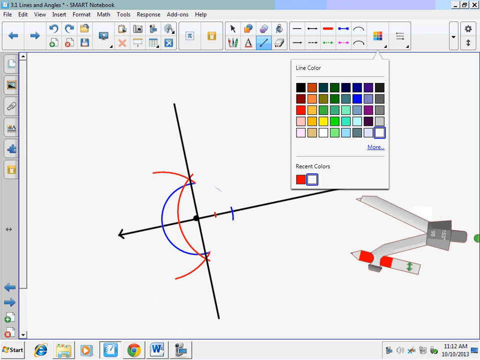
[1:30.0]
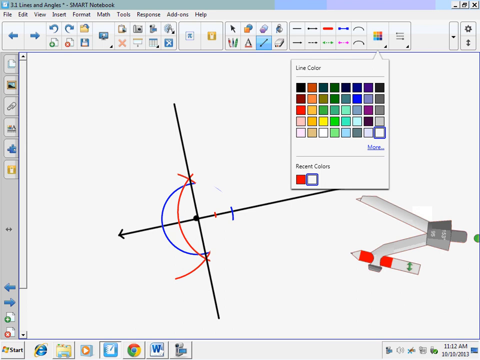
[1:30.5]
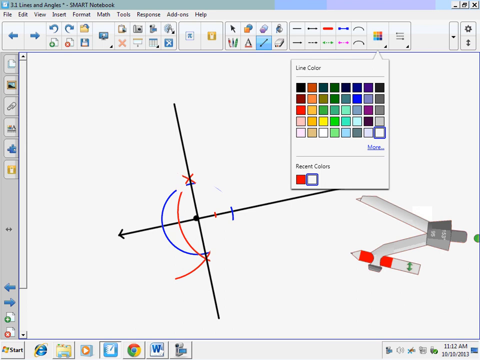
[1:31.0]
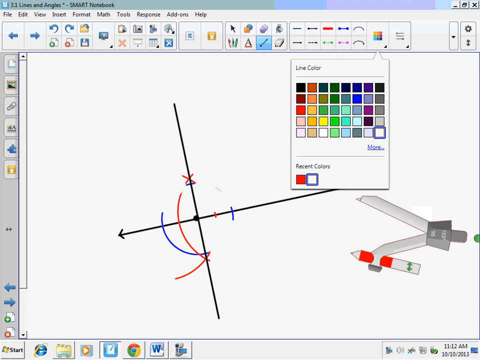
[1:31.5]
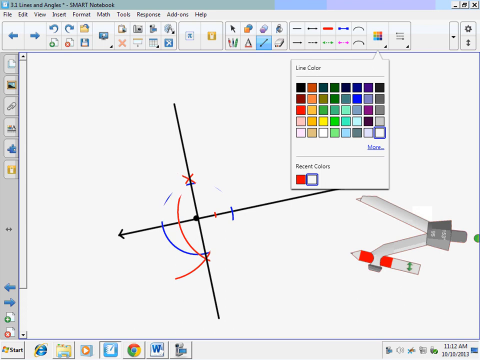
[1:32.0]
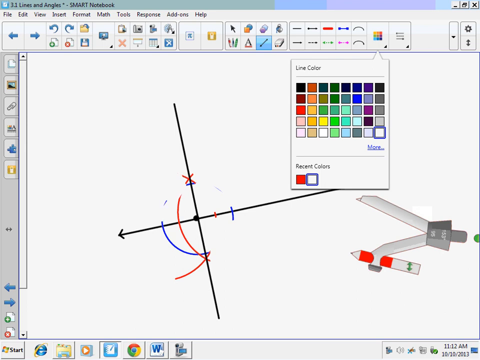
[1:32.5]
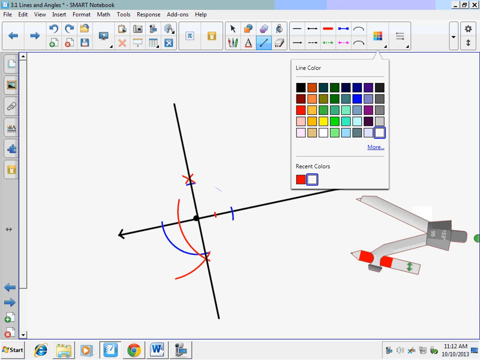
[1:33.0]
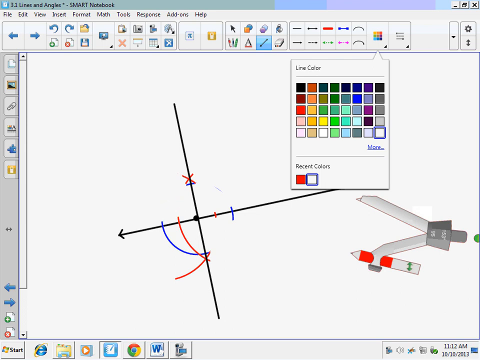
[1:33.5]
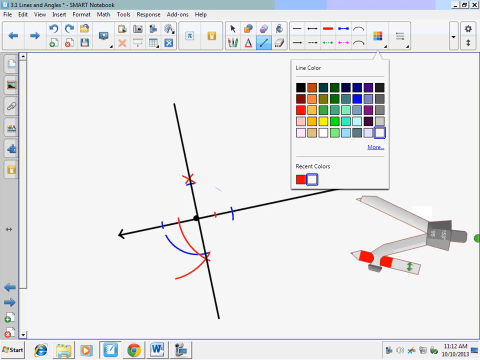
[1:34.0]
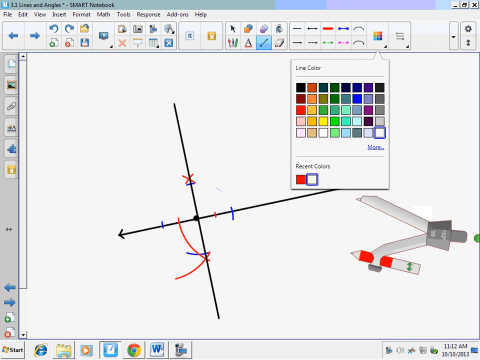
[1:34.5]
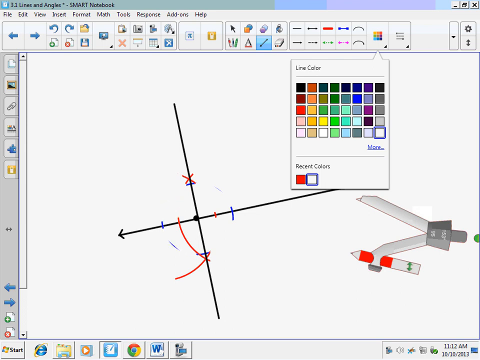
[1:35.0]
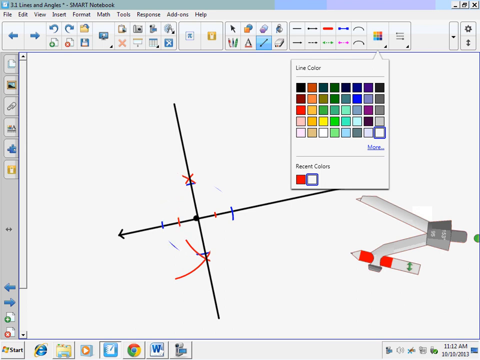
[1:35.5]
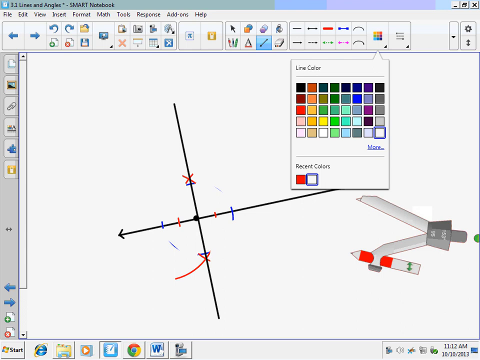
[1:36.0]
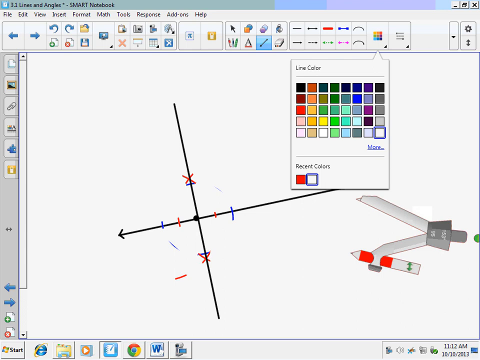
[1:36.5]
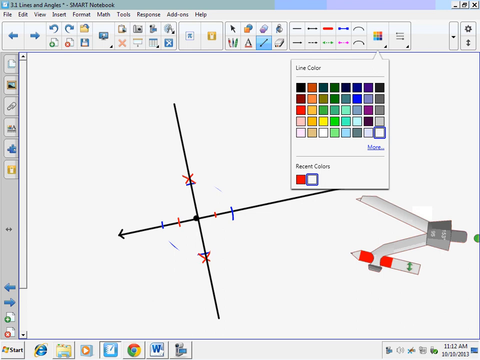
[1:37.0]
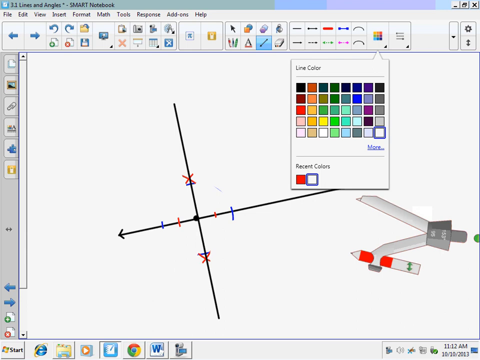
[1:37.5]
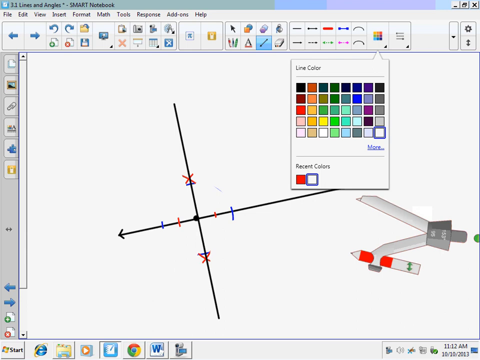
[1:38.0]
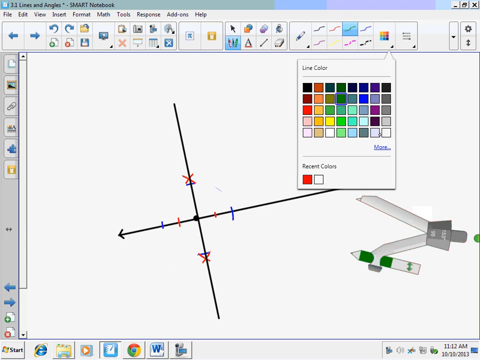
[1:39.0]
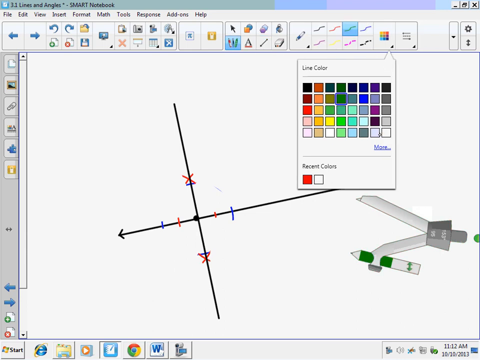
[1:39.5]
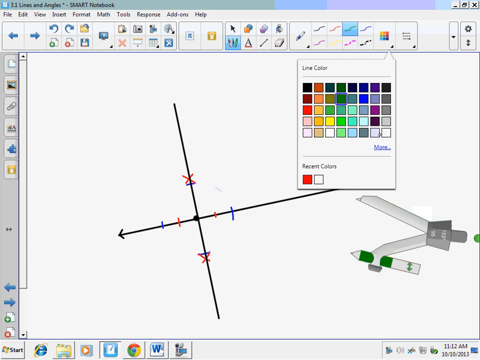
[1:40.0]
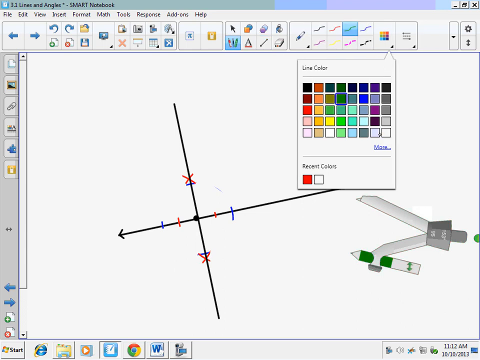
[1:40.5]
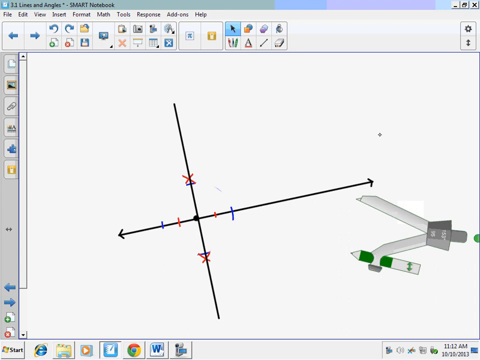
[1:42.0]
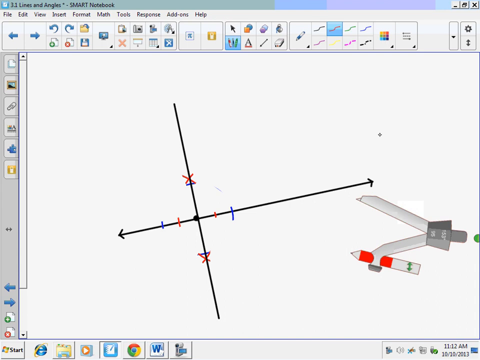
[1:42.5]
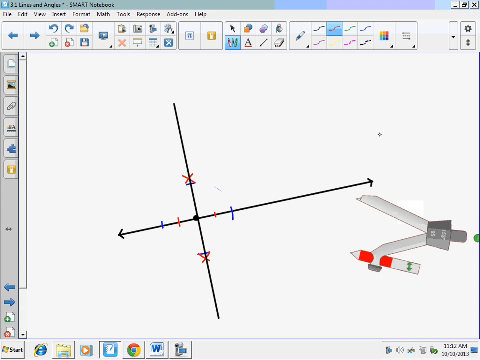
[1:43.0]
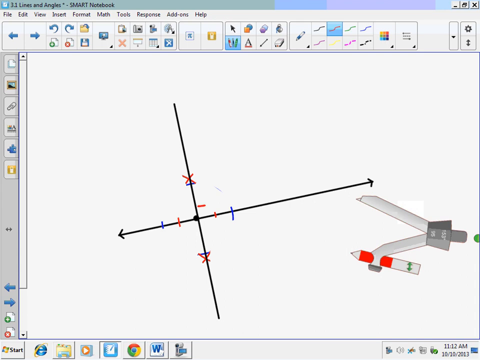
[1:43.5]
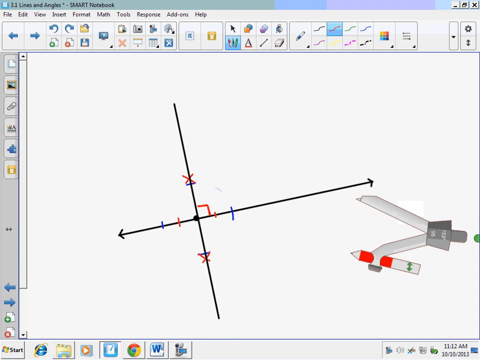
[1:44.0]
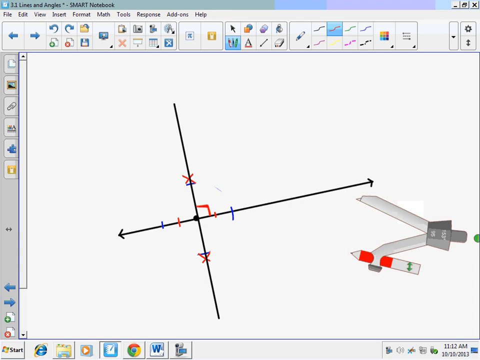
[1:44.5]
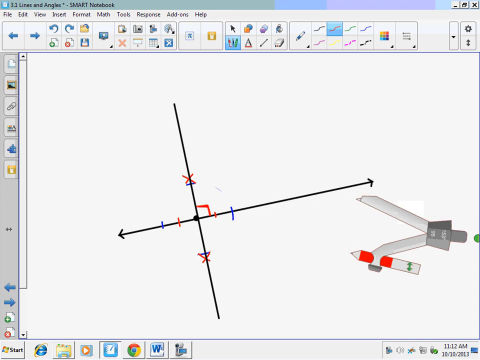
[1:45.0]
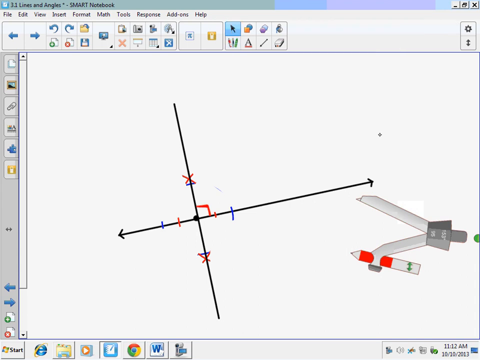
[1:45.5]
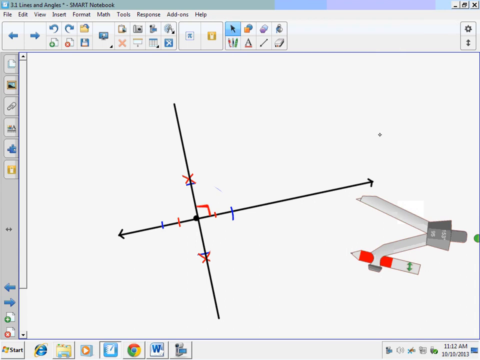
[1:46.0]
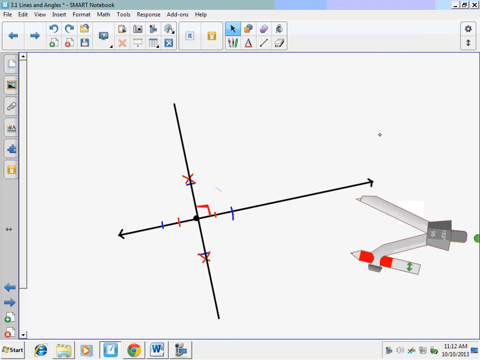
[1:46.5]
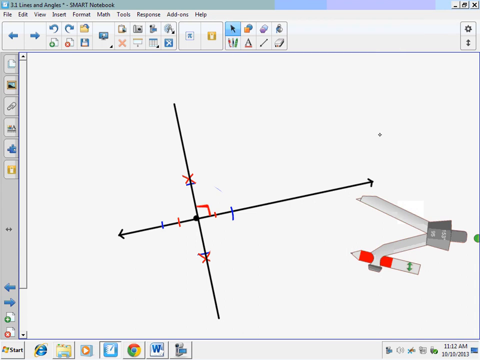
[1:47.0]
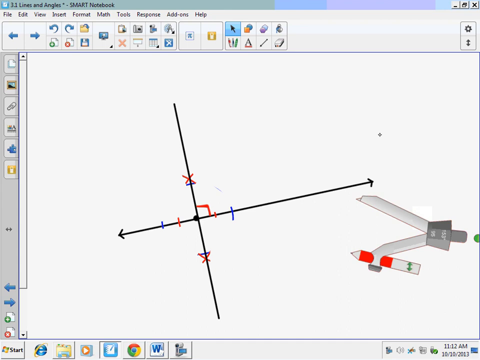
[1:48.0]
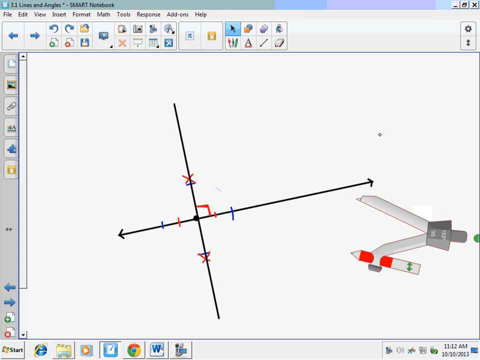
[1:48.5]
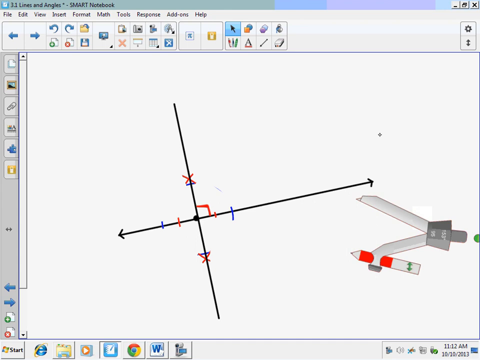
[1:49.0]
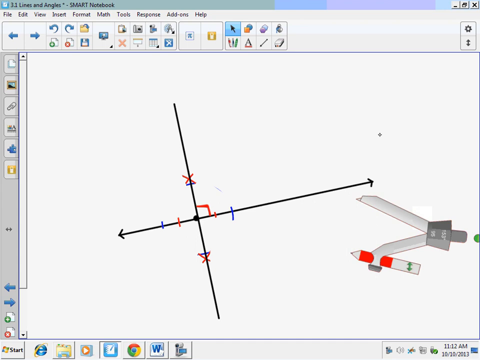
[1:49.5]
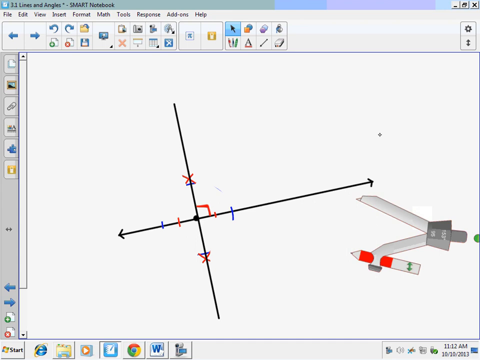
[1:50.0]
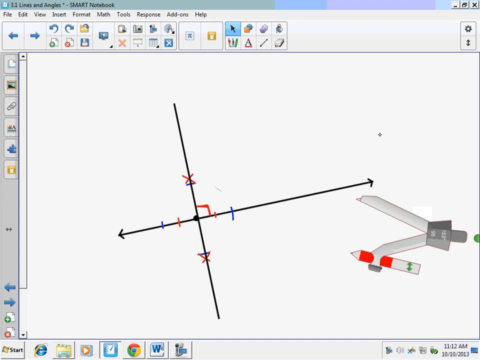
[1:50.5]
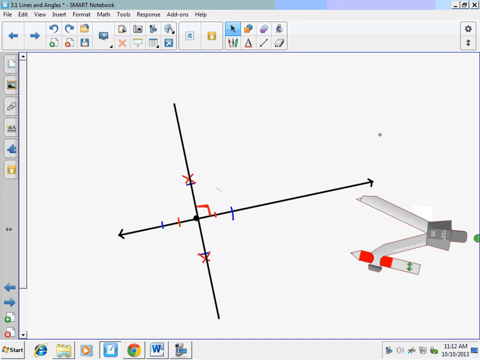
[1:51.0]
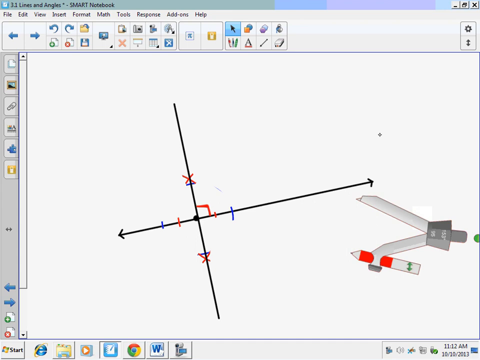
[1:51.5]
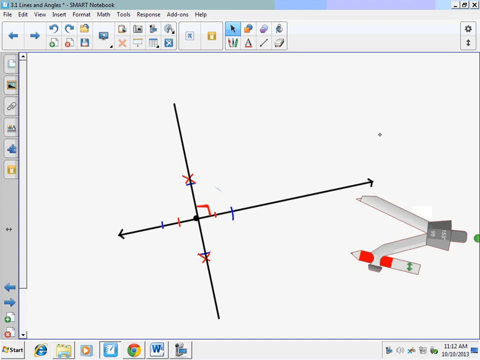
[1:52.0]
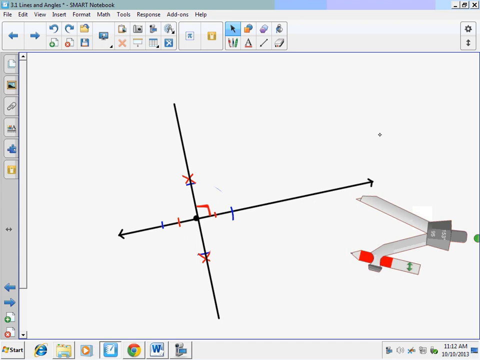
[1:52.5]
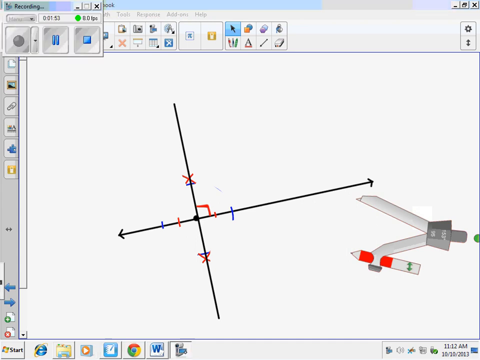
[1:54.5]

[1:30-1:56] A computer display is recorded showing a program titled "3.3 Lines at Angle Smart Notebook." Two intersecting lines are on the workspace, with a point where they intersect. The user is in the process of erasing the blue circle drawn around the original point and the two red semicircles that intersect where the other line meets. The color palette is open with the eraser, and then it is closed. The user opens a marker tool and, with the red marker, draws a small square box at the angle where the two lines meet. They then change the mouse cursor from the marker tool to a regular cursor. On the right side of the workspace is a compass tool that looks like a flat, cartoonish clipart compass, with one side pointed and a red marker attached to the other side.